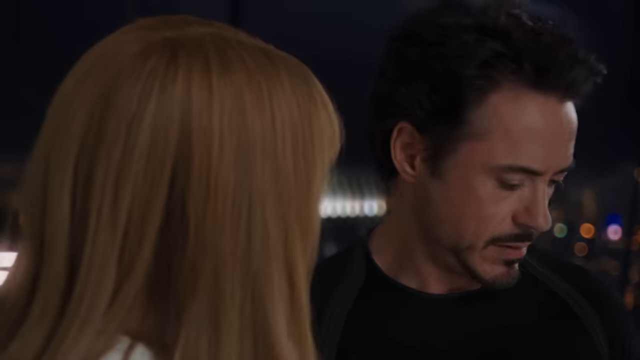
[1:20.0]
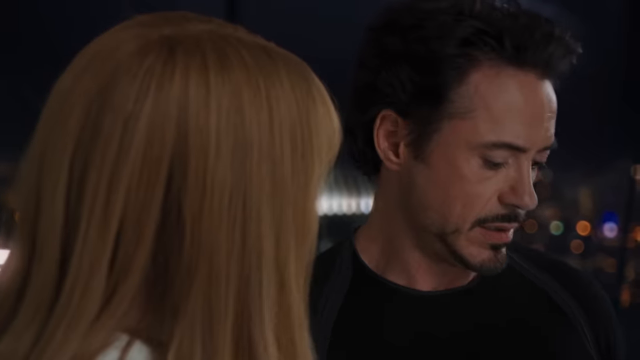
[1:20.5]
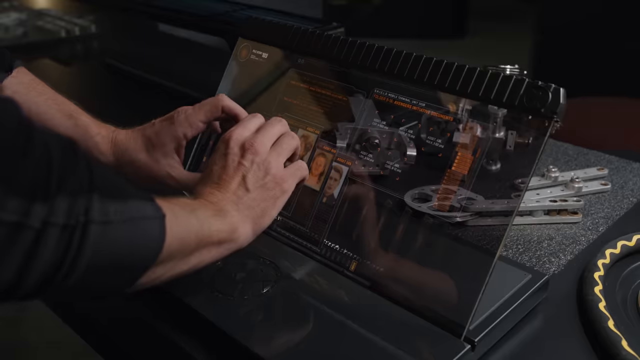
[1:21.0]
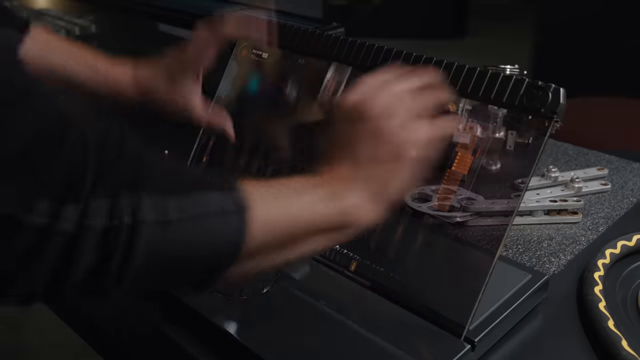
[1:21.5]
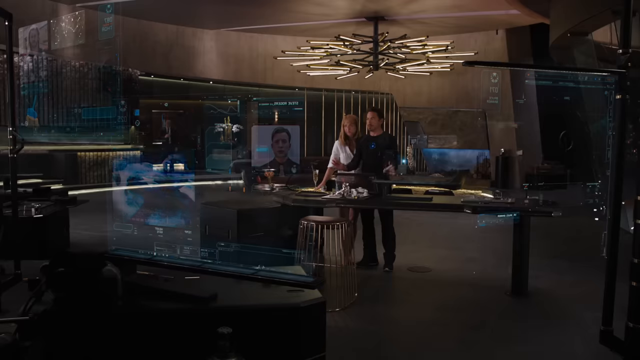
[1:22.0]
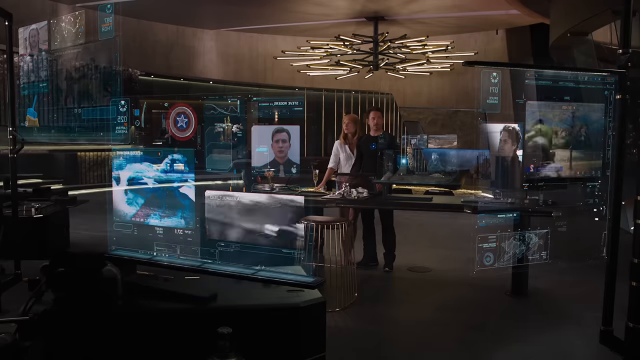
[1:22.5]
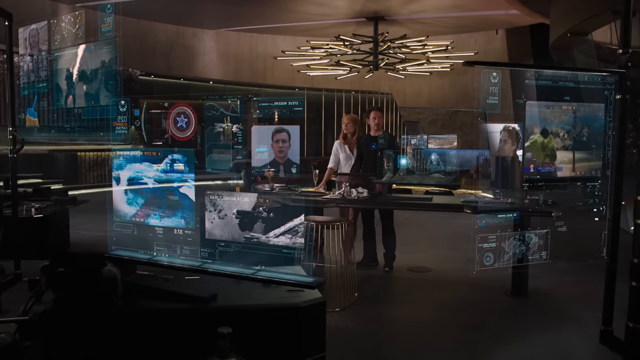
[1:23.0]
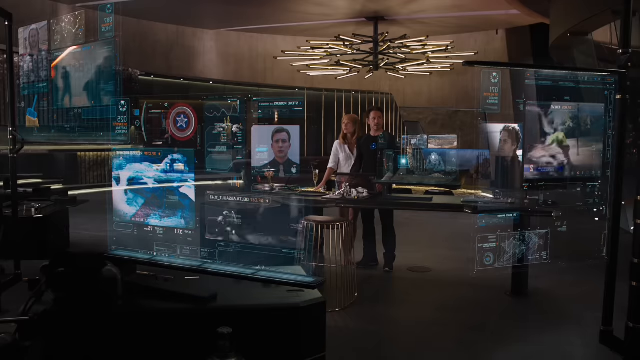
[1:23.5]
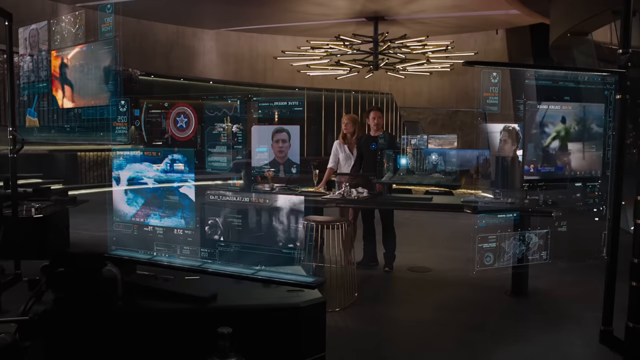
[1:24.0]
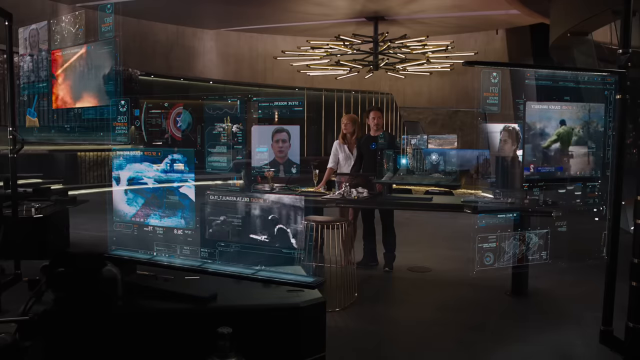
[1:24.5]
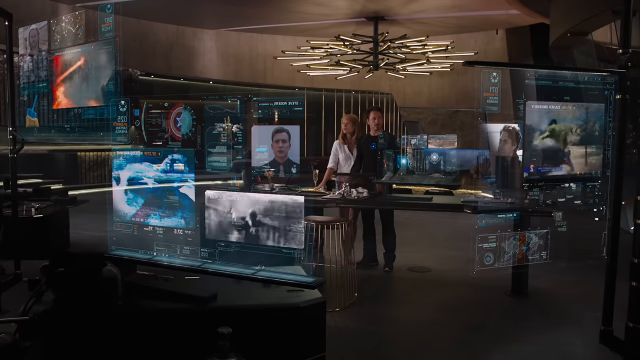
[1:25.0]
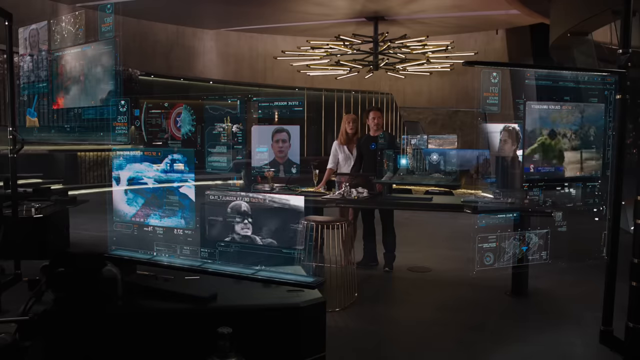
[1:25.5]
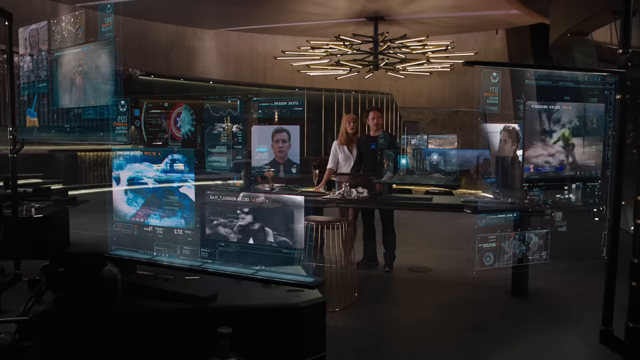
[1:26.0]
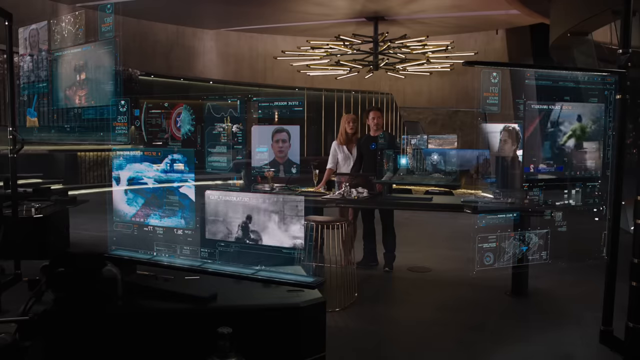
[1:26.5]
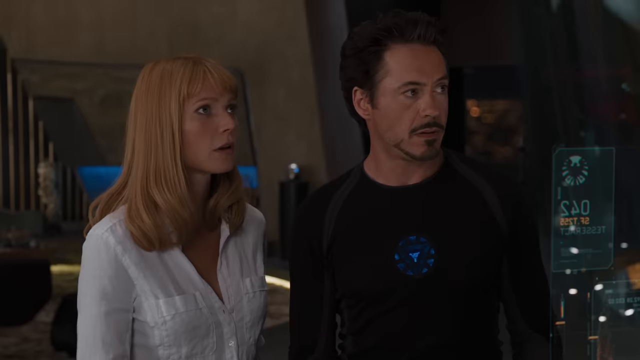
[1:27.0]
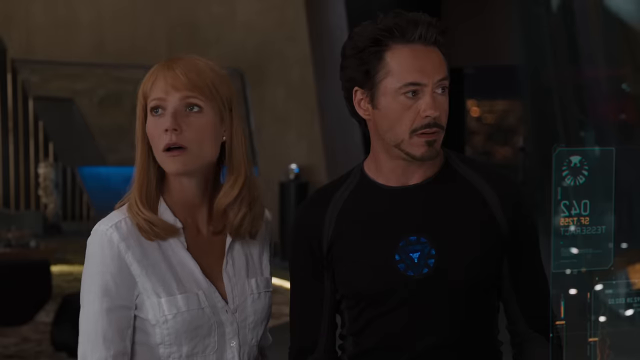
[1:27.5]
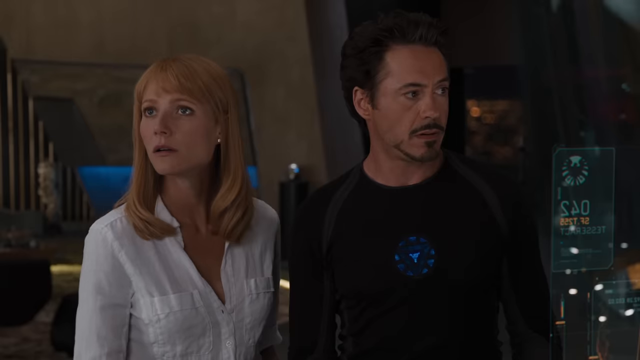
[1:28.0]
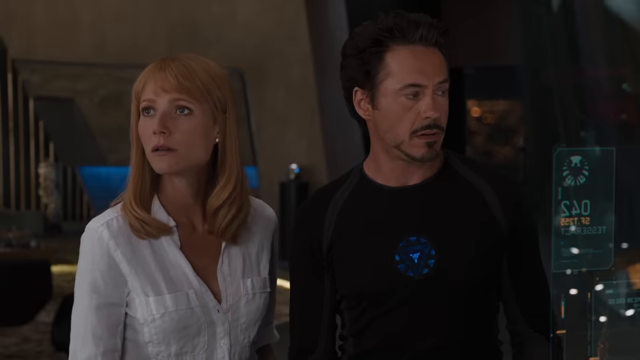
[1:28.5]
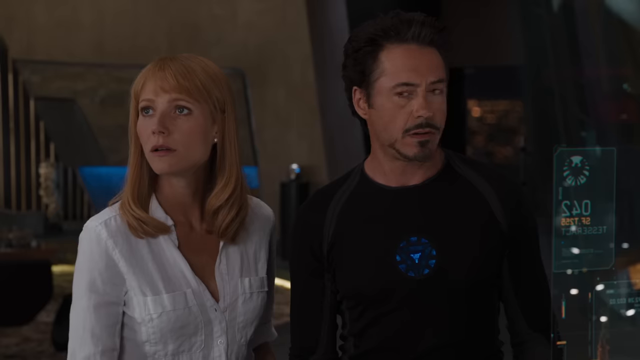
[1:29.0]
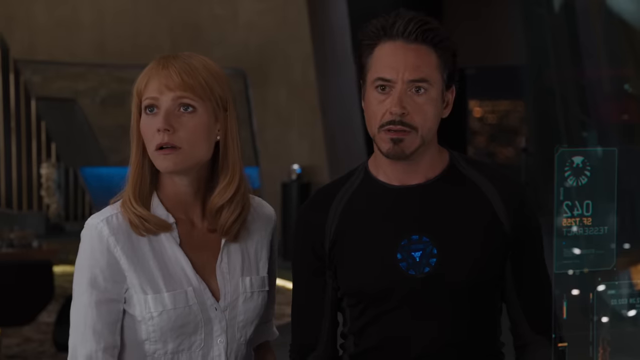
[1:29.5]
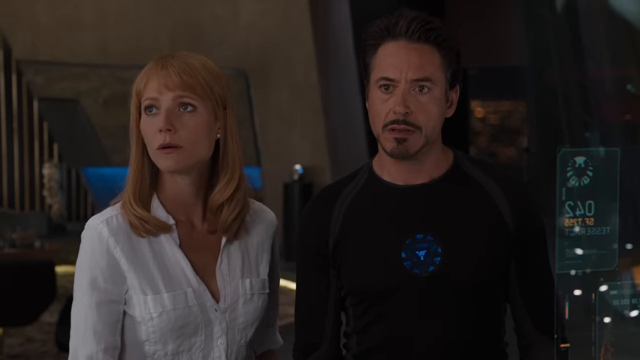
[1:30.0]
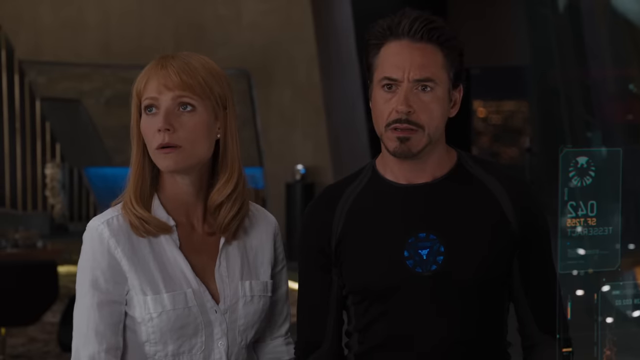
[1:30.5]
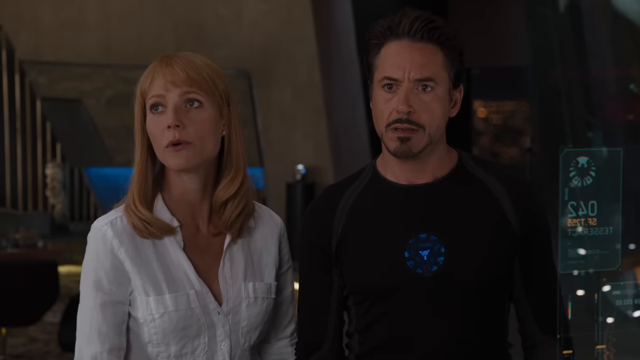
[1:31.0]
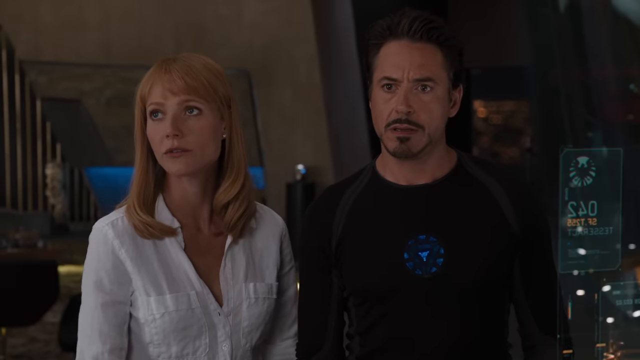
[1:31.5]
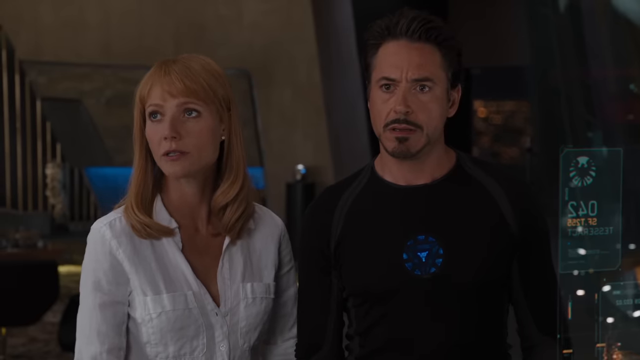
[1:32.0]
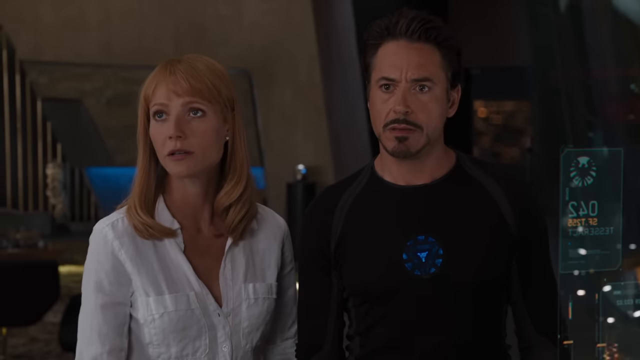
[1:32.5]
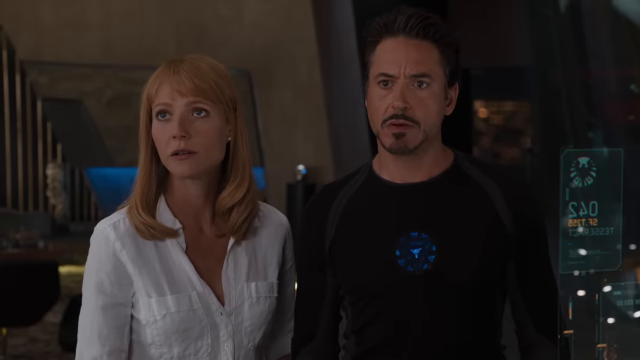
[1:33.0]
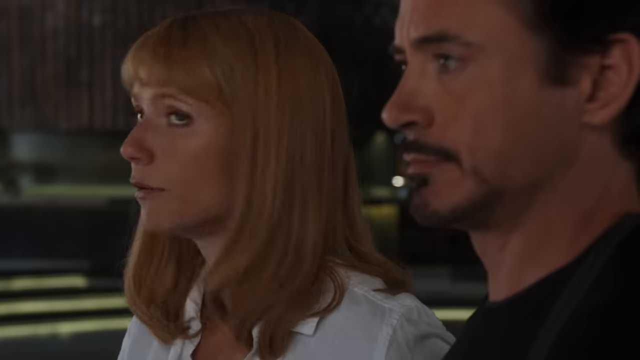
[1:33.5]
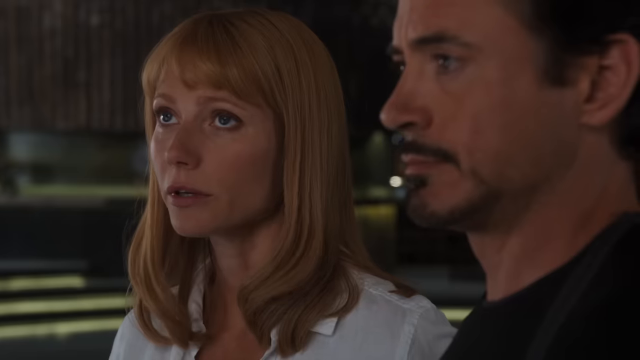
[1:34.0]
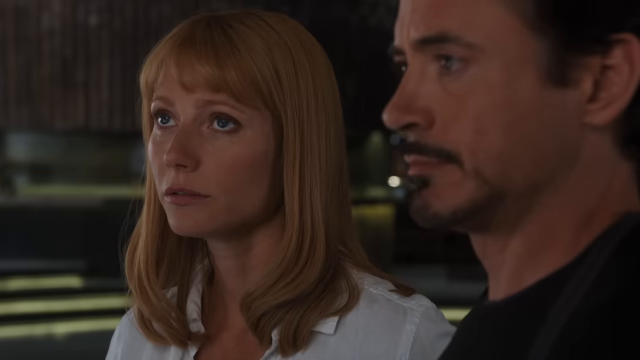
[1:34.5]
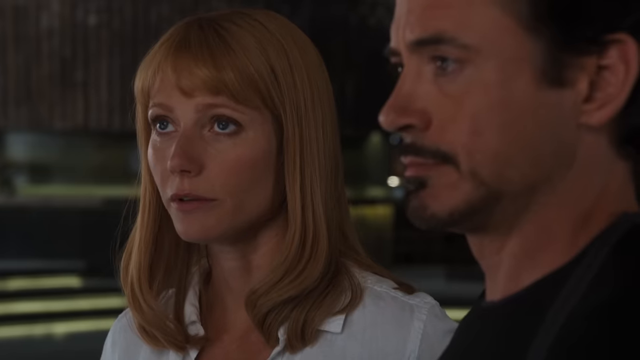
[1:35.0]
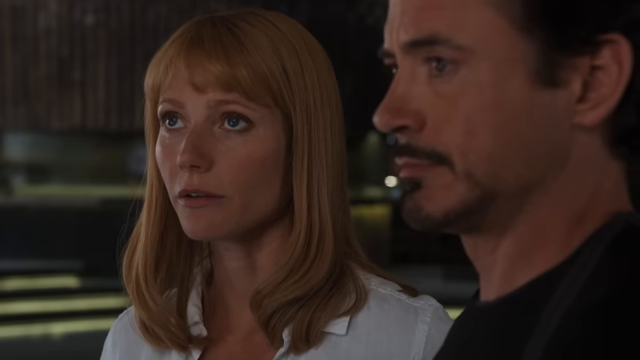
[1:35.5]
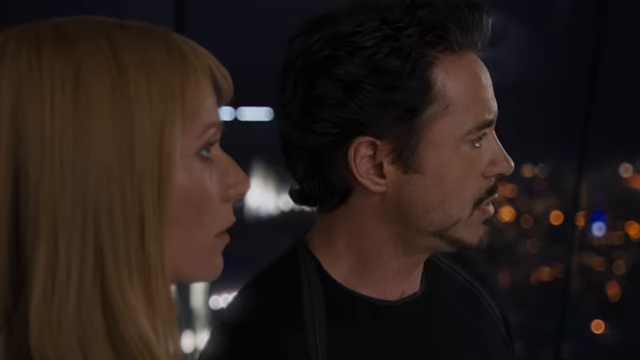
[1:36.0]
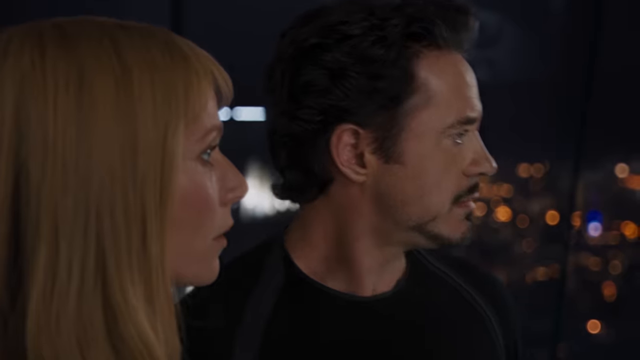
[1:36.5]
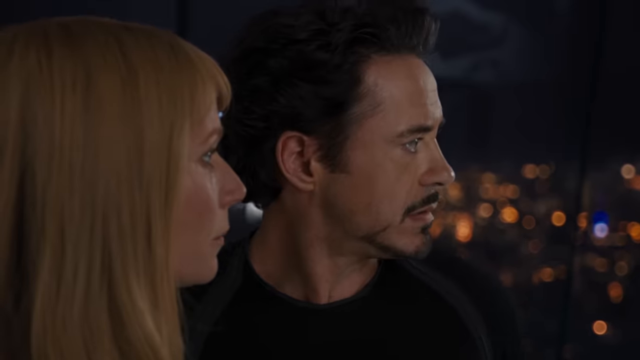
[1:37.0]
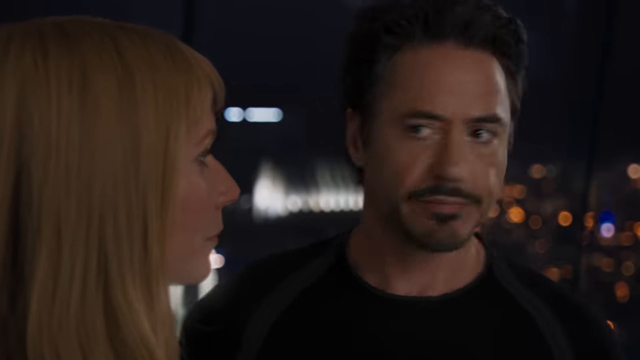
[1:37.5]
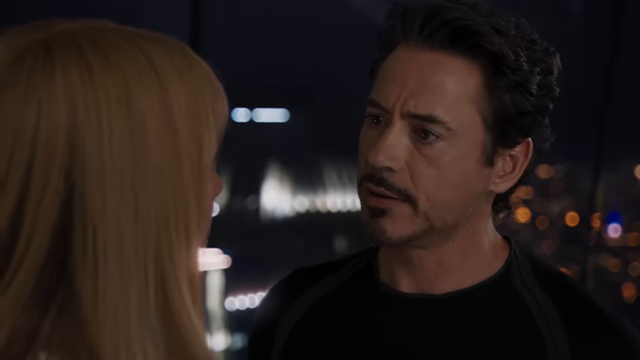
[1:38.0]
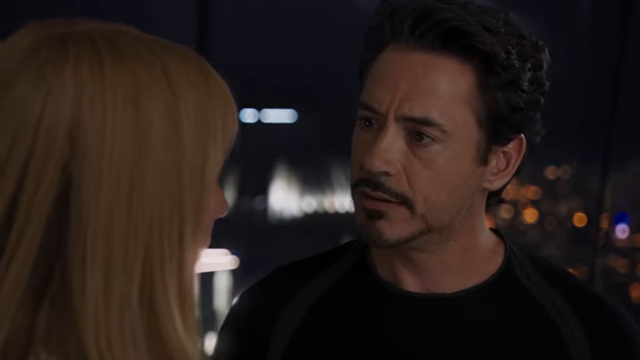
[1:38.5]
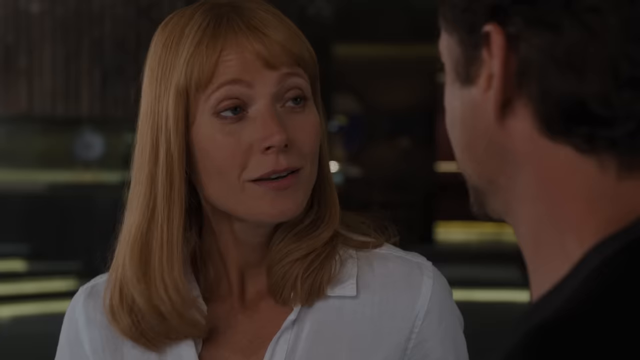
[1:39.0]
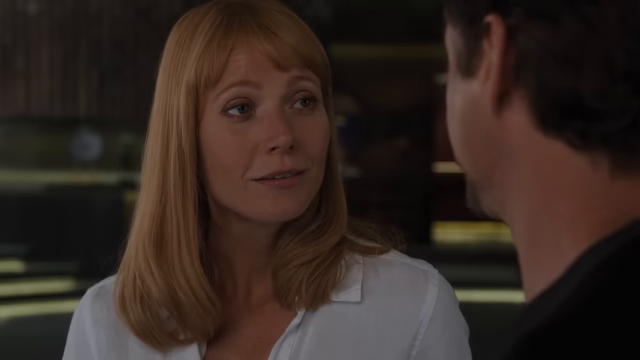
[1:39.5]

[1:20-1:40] Robert Downey Jr., in his mid-50s, has dark hair that stands up, dark eyes, a mustache and a goatee, and wears a long-sleeve black shirt and black pants. On his chest, in the middle, is a blue circular object with a triangle in the middle. His friend, in her mid-40s, has red hair and dark eyes and wears a white top and blue jean shorts. Robert touches something, and all of the screens come on with different things happening at once. The screens are all translucent. His friend has a puzzled look on her face, with big brown eyes.